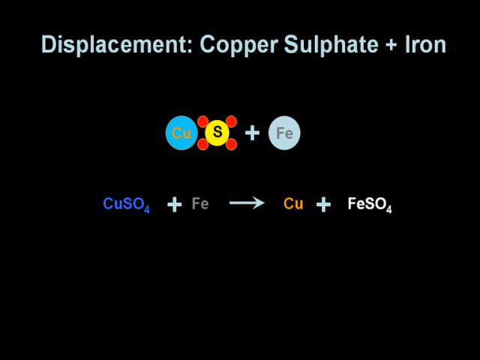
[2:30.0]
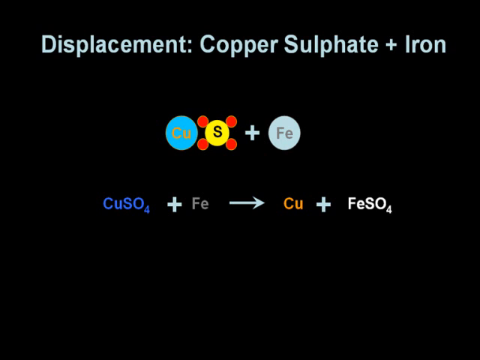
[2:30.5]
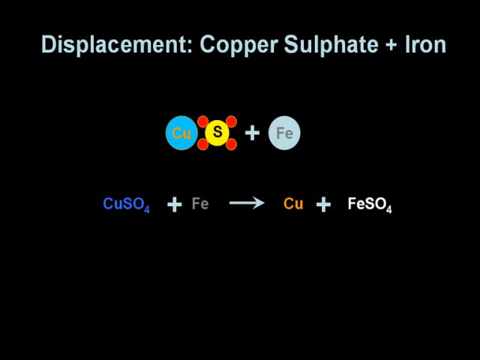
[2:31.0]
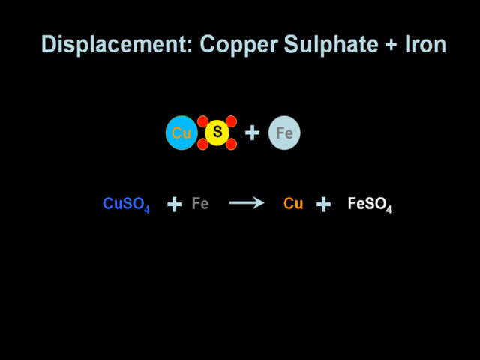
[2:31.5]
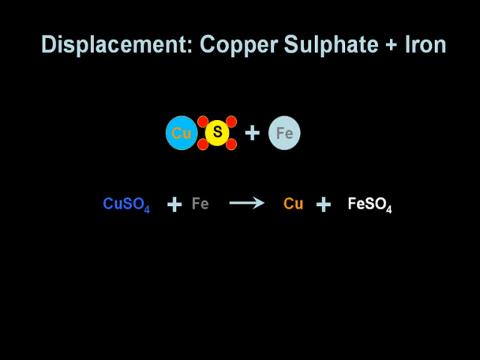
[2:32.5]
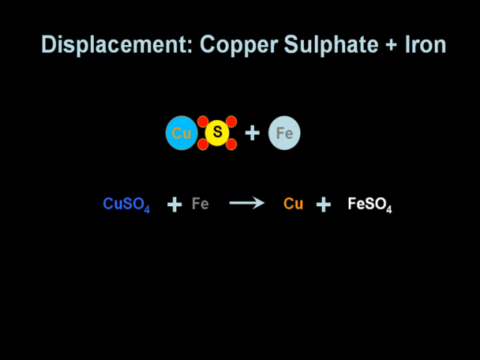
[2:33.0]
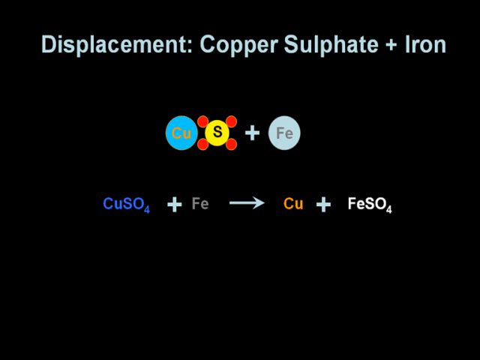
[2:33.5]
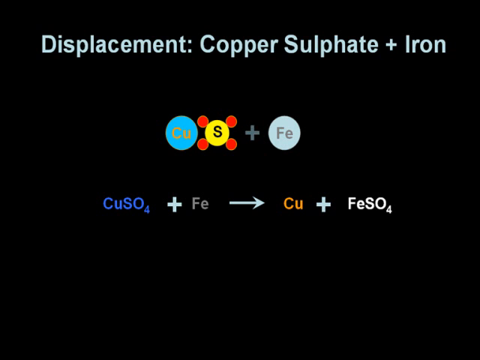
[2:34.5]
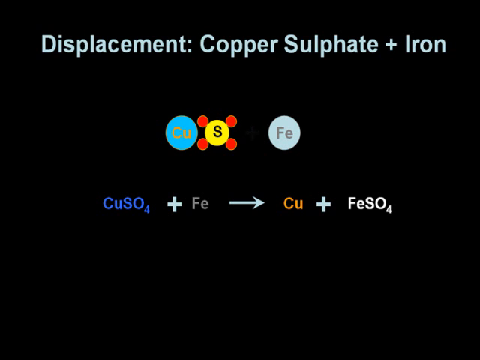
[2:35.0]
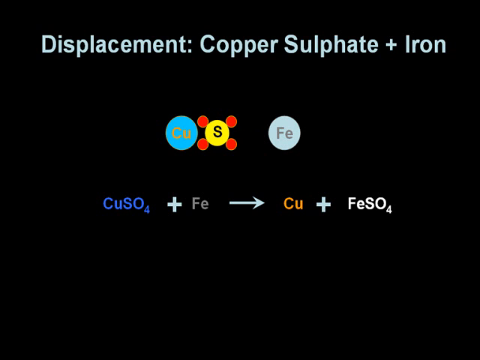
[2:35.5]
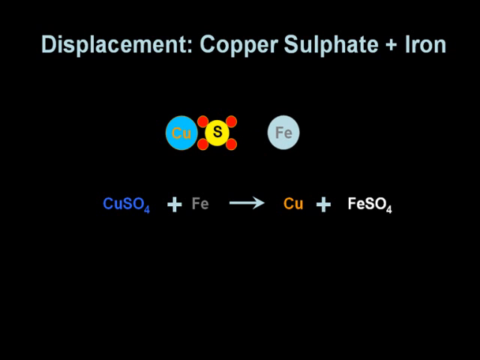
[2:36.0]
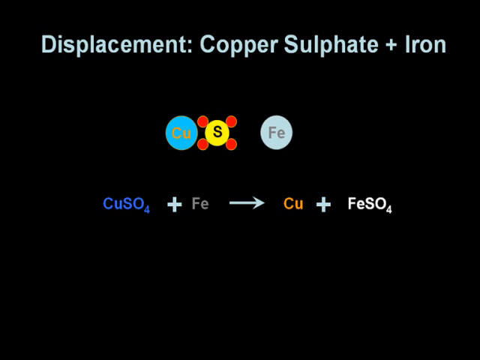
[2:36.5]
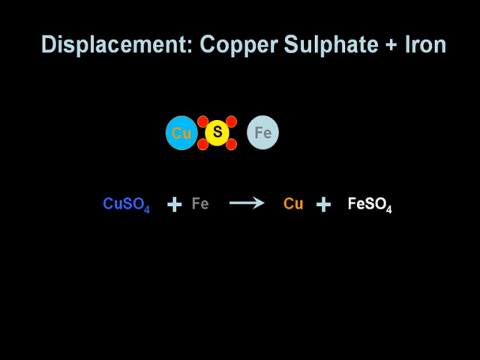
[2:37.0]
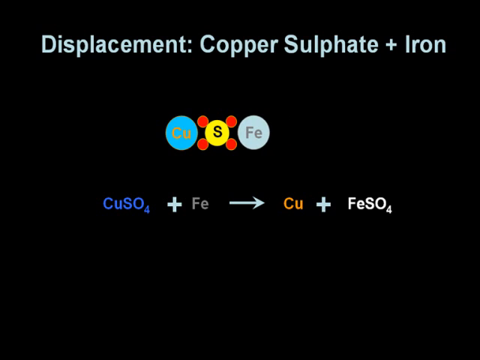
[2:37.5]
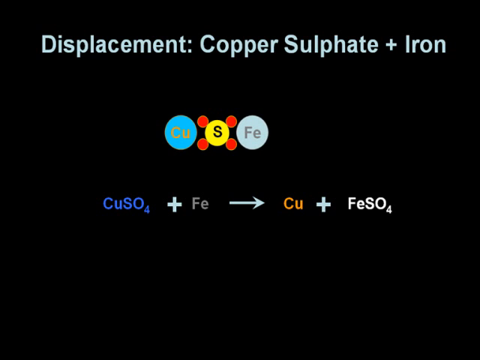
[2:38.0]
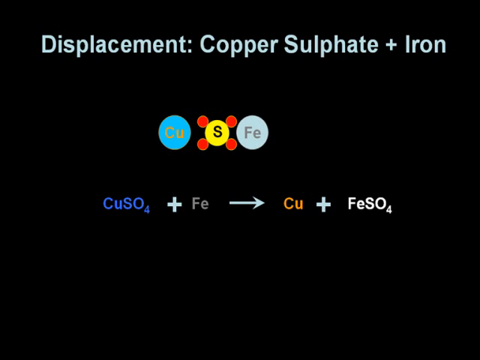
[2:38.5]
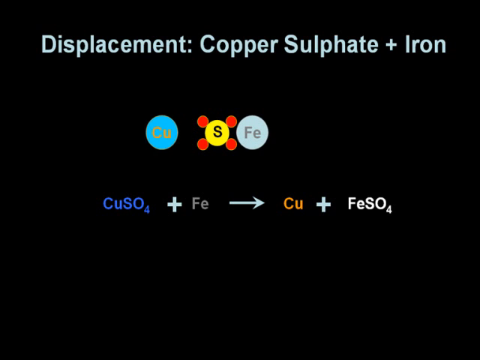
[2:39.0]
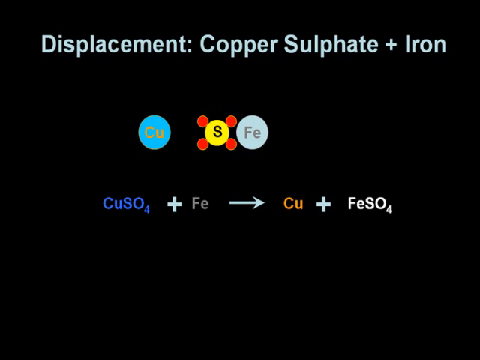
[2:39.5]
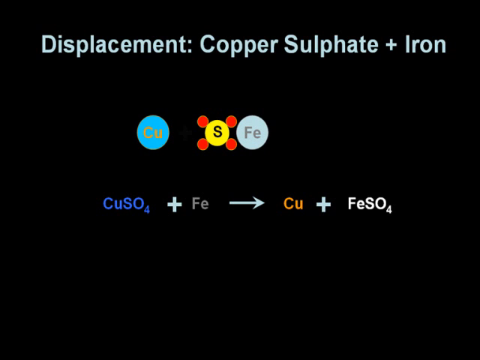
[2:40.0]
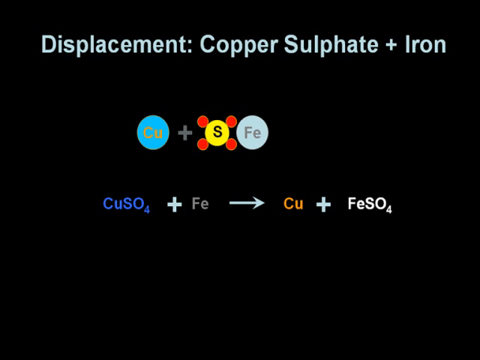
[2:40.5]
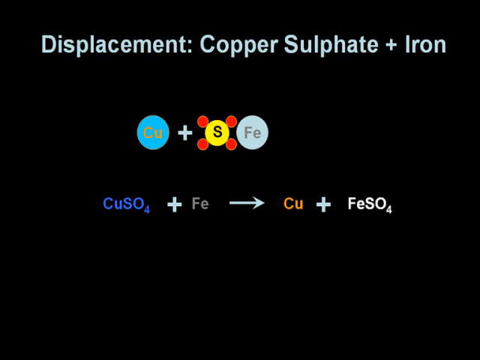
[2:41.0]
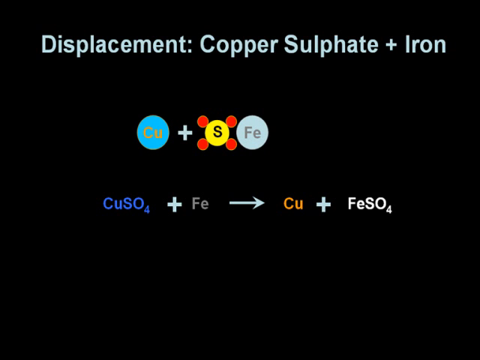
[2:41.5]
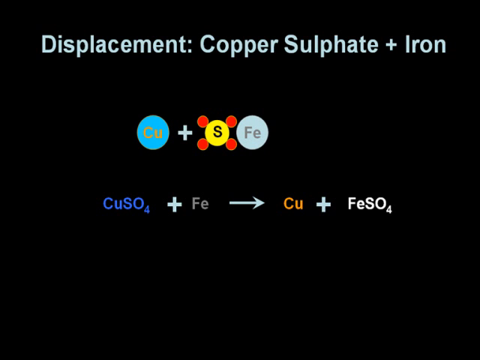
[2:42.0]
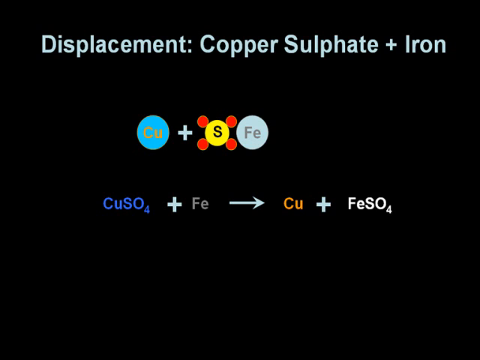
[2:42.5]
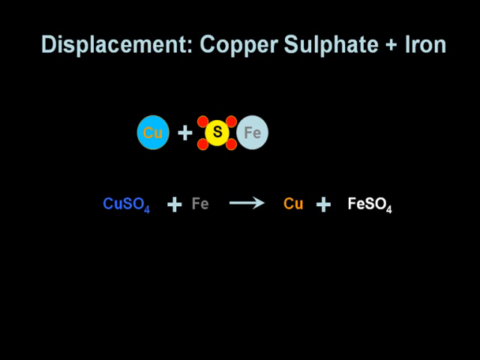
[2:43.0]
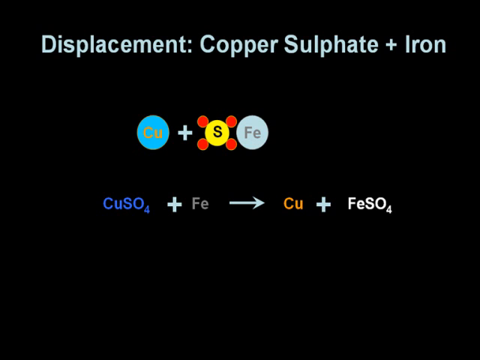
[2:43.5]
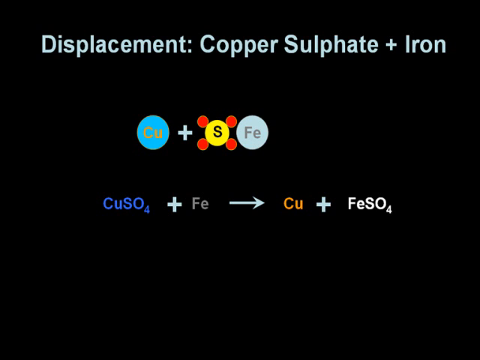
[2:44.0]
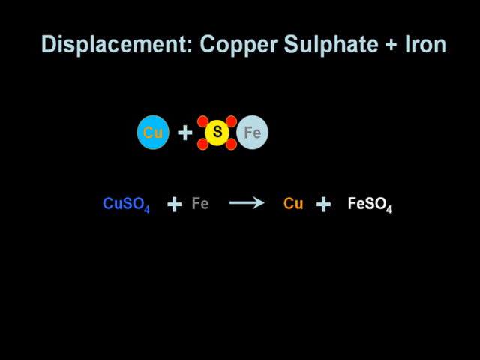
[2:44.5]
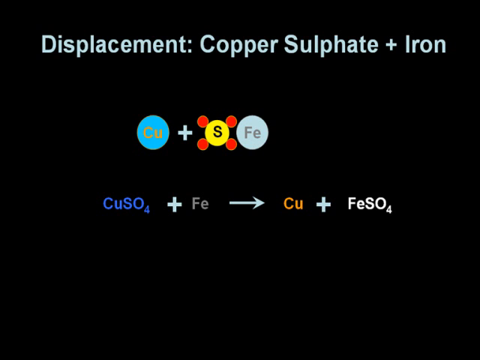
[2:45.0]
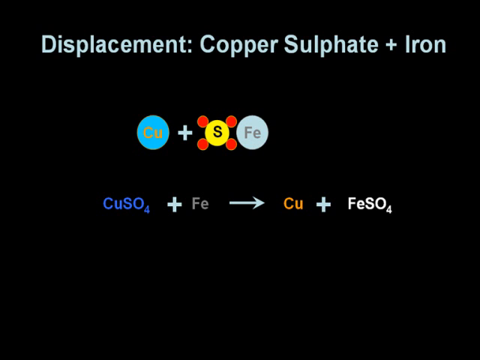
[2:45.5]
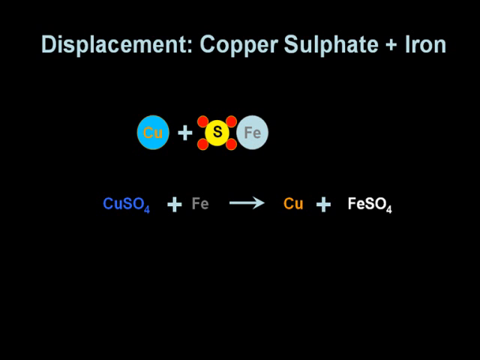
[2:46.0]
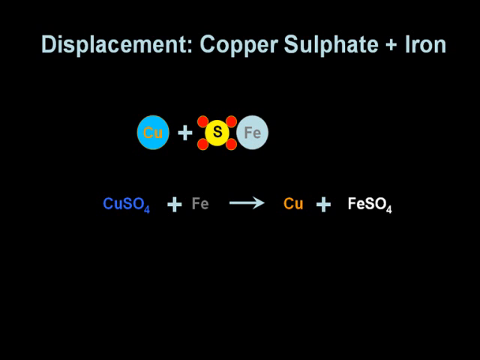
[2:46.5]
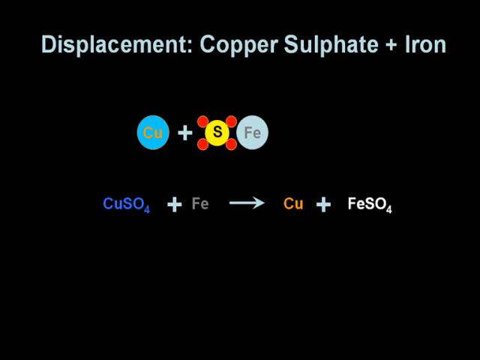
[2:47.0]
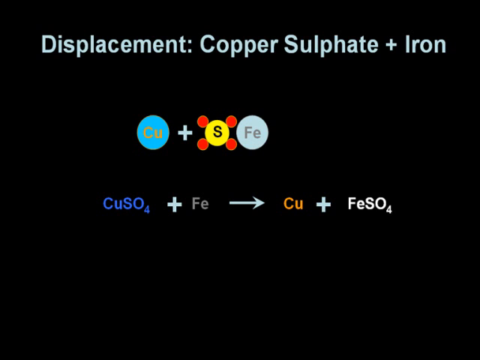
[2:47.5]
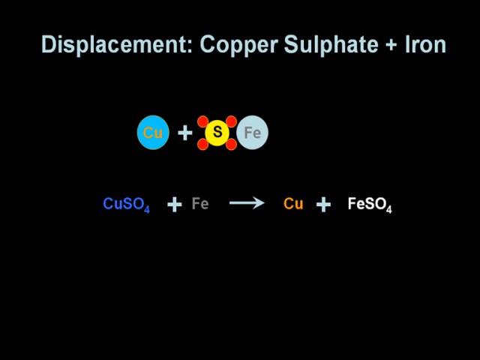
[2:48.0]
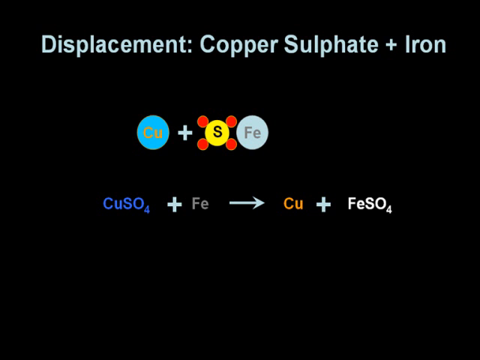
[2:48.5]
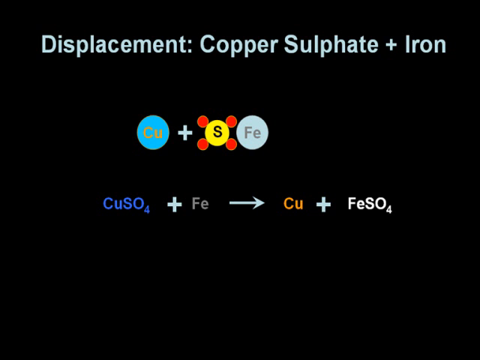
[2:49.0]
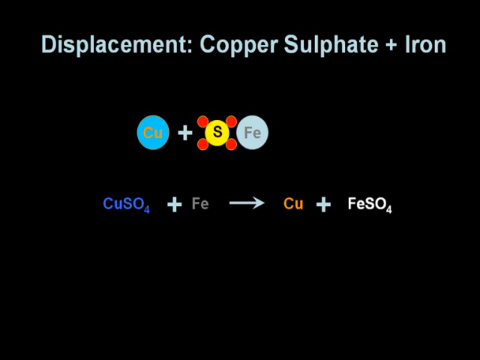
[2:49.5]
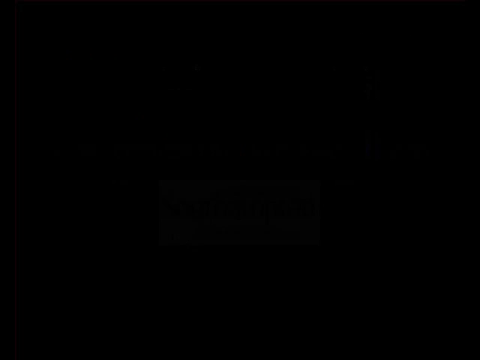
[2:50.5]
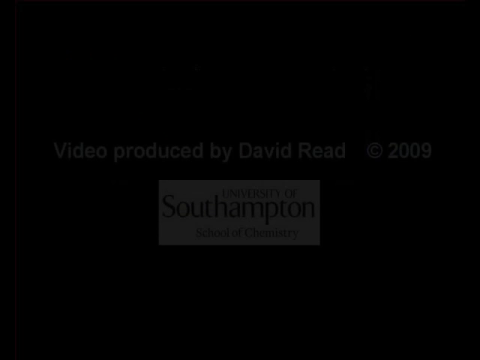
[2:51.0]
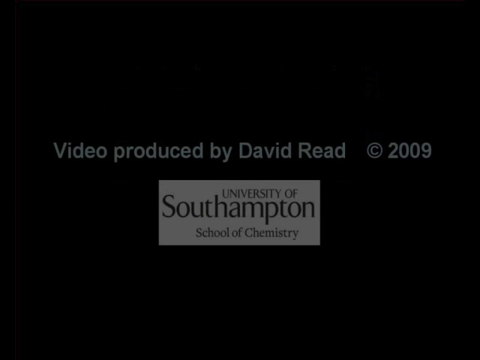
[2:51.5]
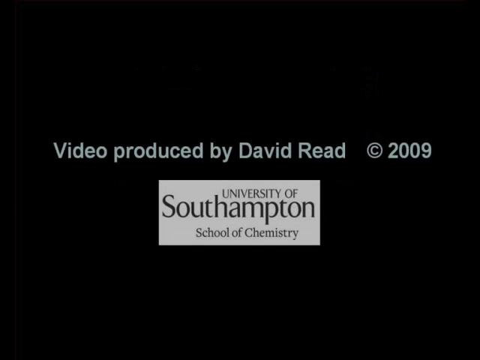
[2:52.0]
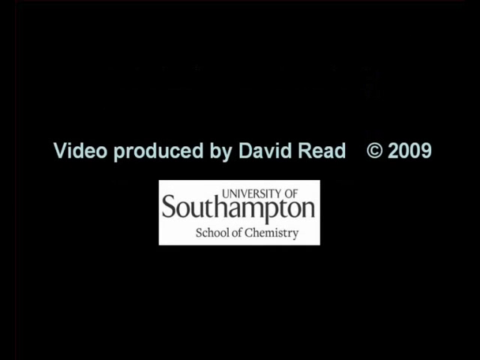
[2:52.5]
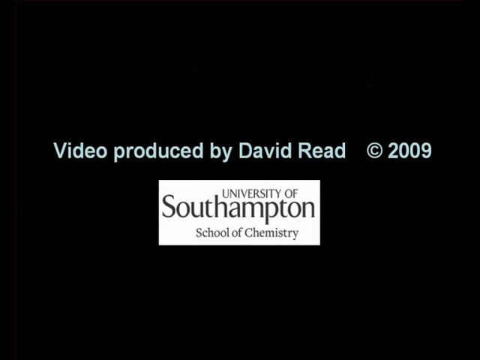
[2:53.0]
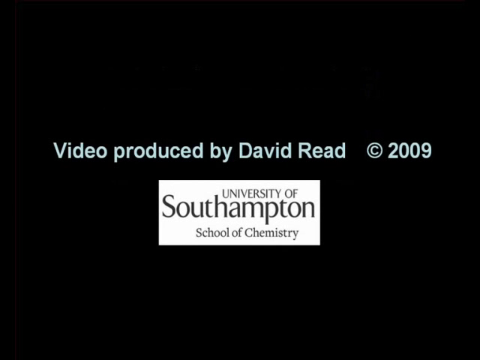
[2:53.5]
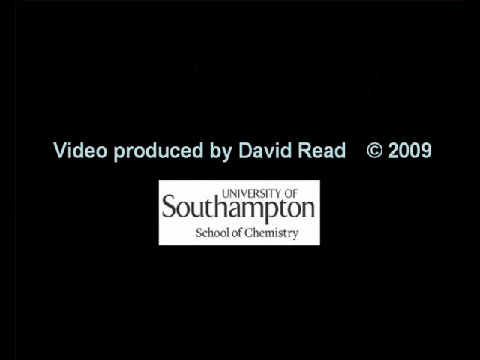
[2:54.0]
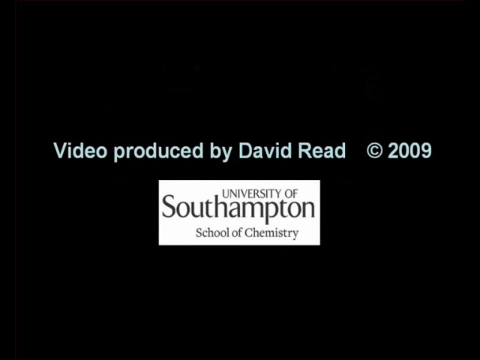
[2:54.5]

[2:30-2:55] The slide shows a black screen with the title "displacement: copper sulfate + iron" in a very light mint green color. Below is the diagram with circles, each with a periodic table symbol written on it: CU in a blue circle, then an F in a yellow circle surrounded by four smaller orangish-red circles, plus FE. The equation is also written out without circles as abbreviations, "CU S O4 + FE → CU + FE S O4", with each part in a different color. The FE then slowly starts to move toward the S, the CU moves away, and a plus sign comes in, changing the equation. Finally, the screen switches to a final screen that reads "Video produced by David Reed copyright 2009 University of South Hampton School of Chemistry".